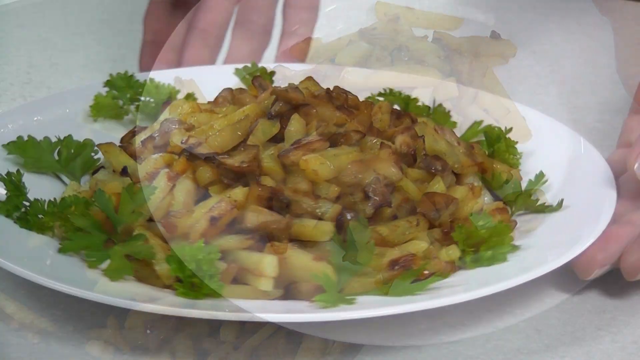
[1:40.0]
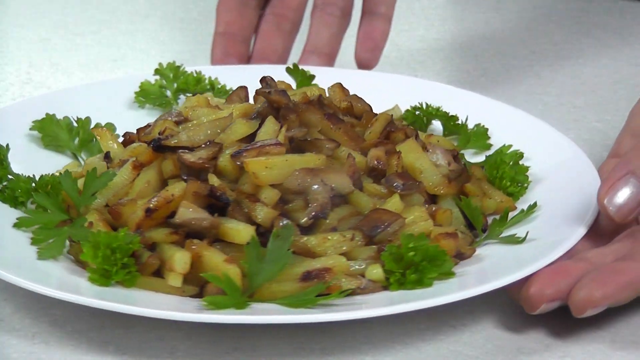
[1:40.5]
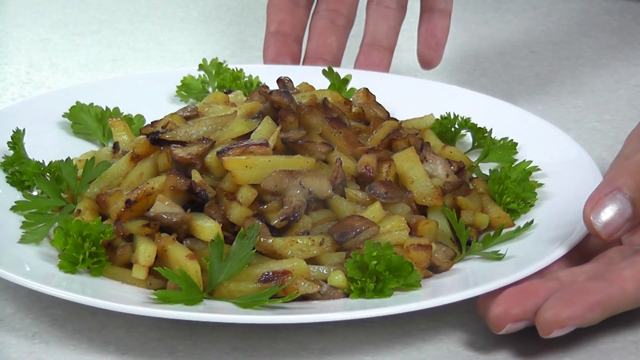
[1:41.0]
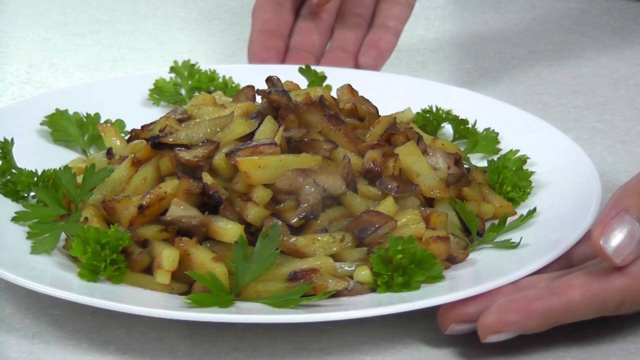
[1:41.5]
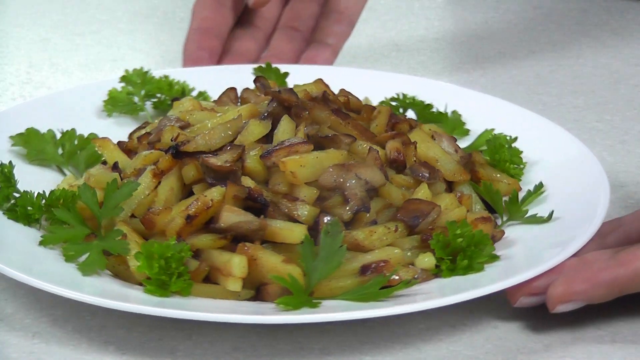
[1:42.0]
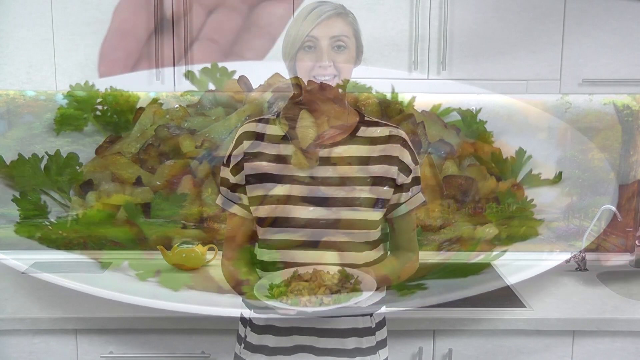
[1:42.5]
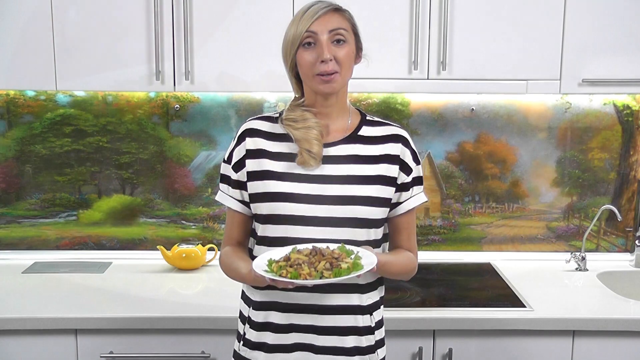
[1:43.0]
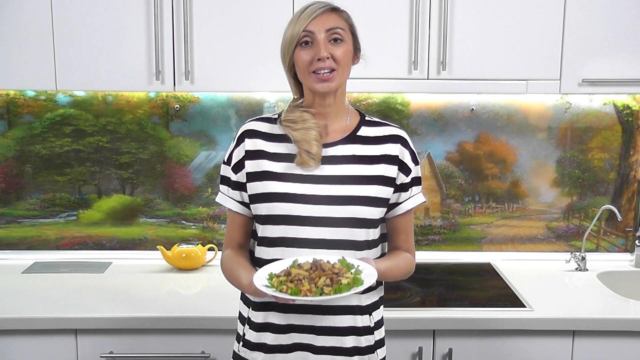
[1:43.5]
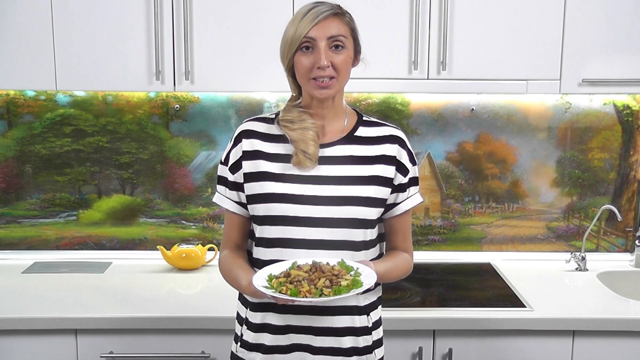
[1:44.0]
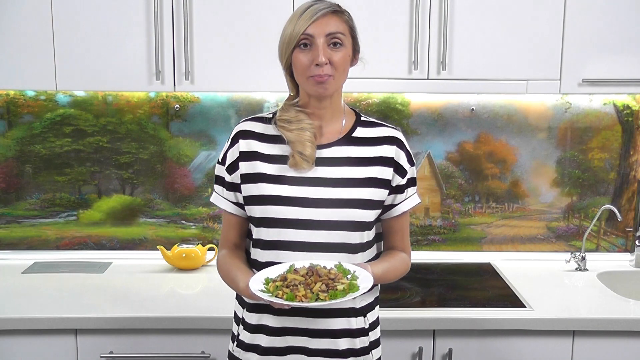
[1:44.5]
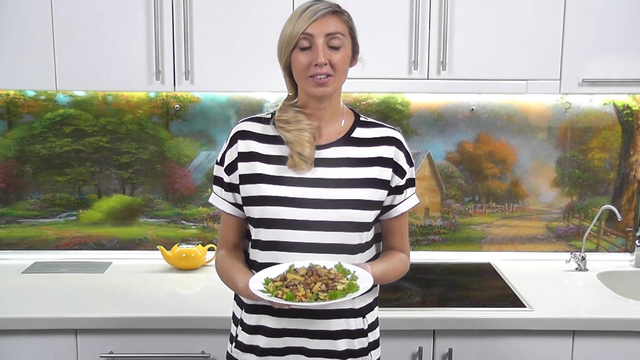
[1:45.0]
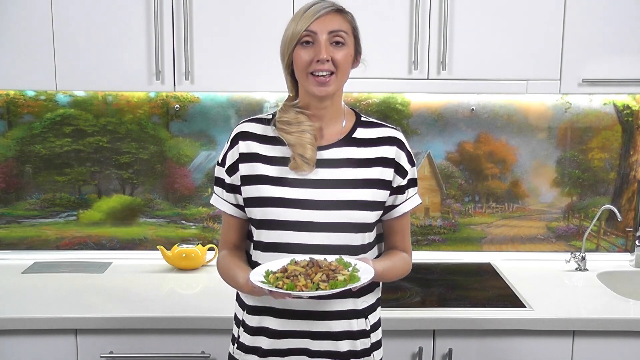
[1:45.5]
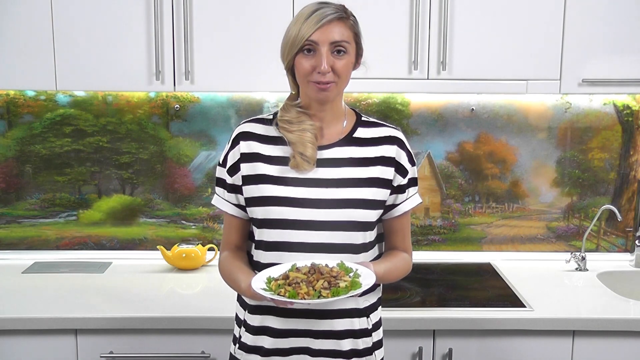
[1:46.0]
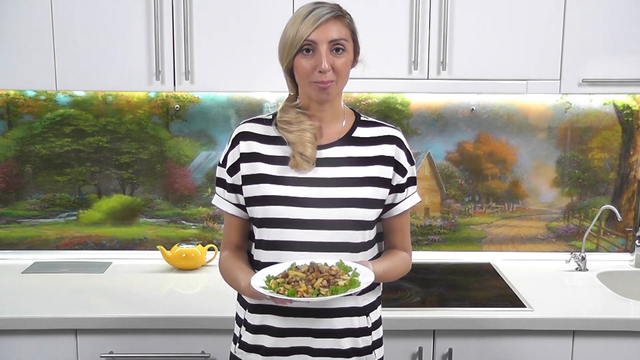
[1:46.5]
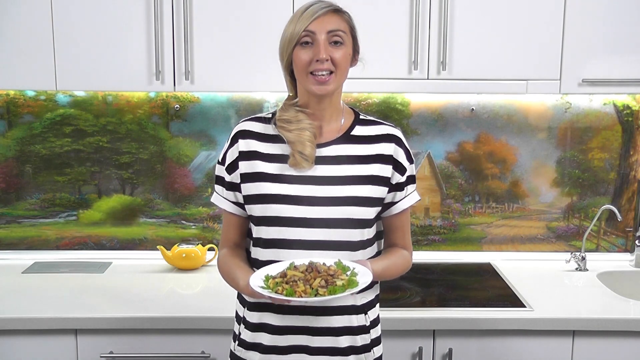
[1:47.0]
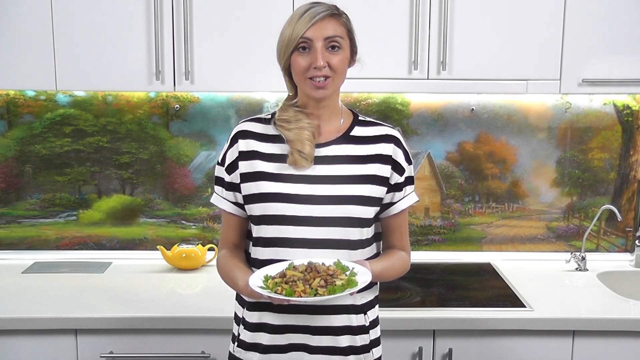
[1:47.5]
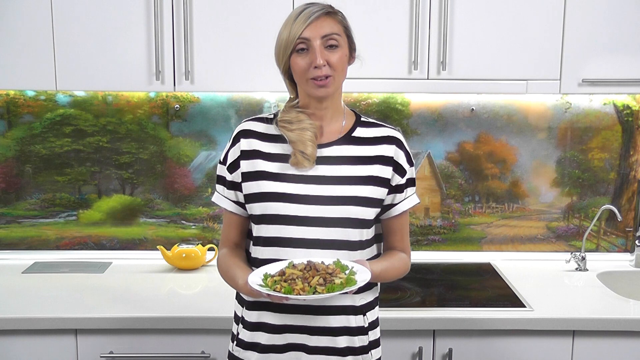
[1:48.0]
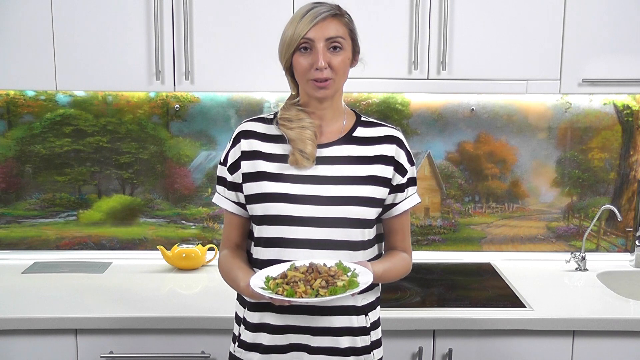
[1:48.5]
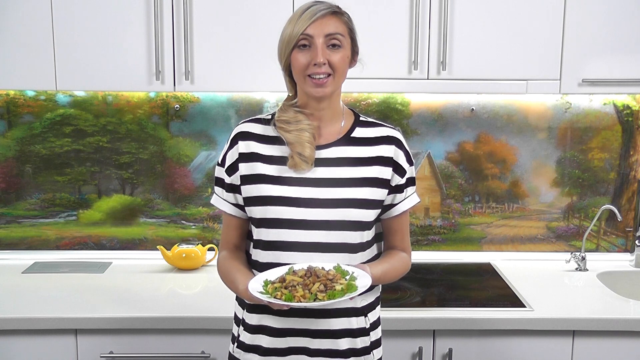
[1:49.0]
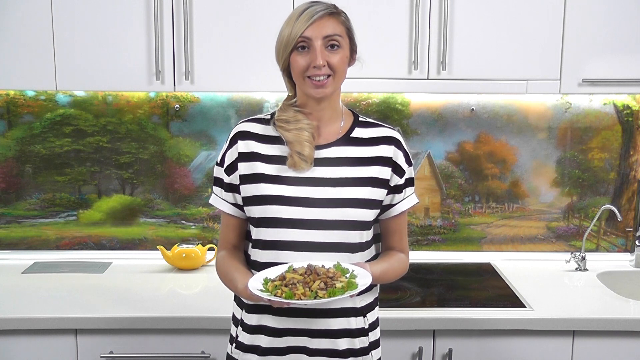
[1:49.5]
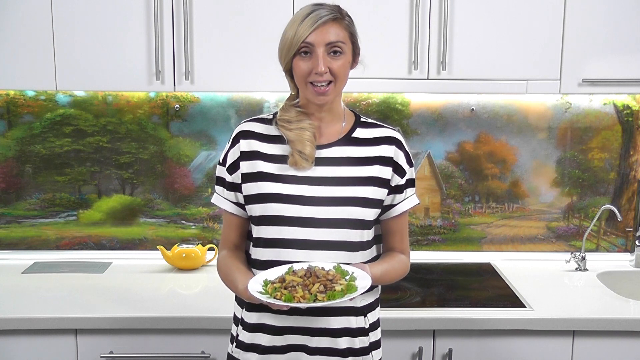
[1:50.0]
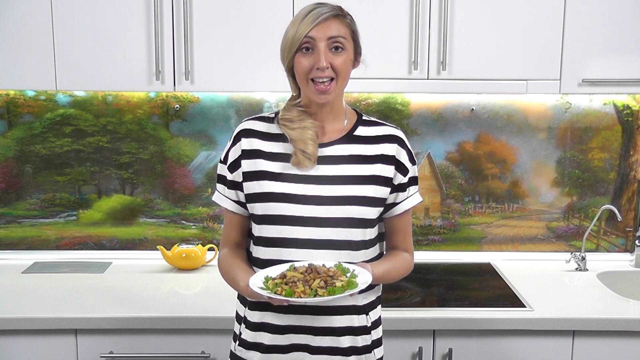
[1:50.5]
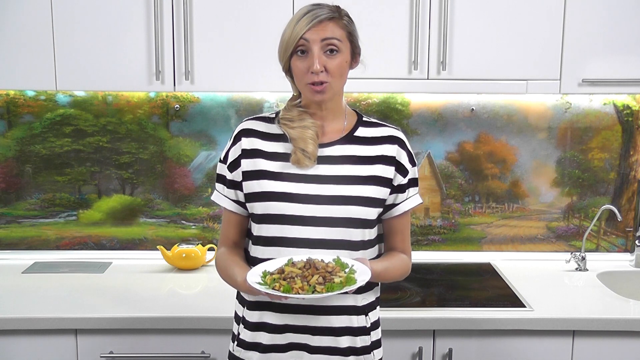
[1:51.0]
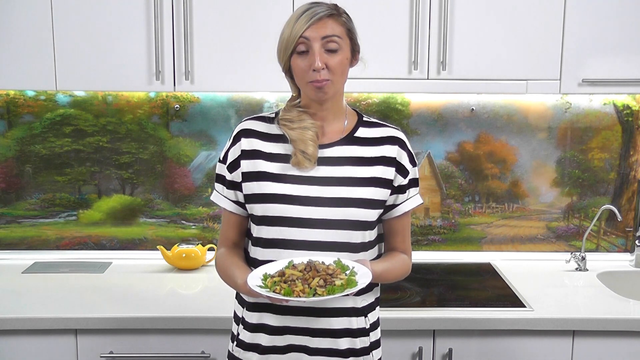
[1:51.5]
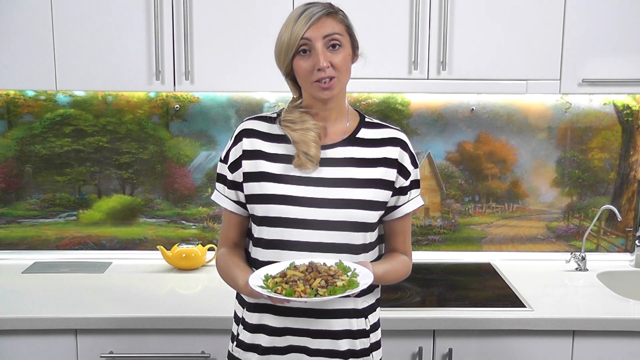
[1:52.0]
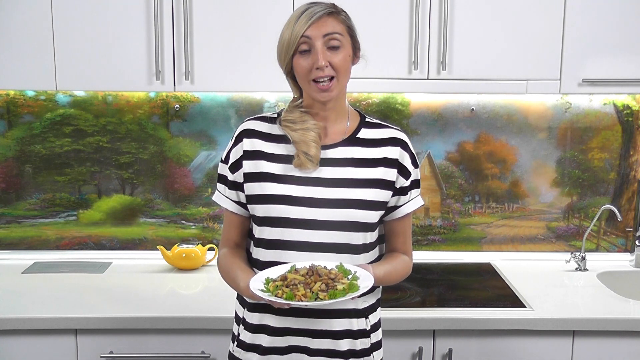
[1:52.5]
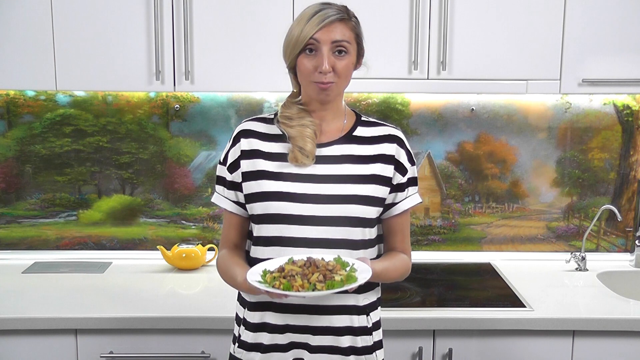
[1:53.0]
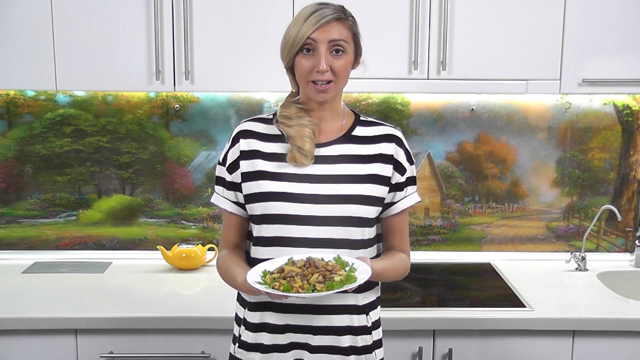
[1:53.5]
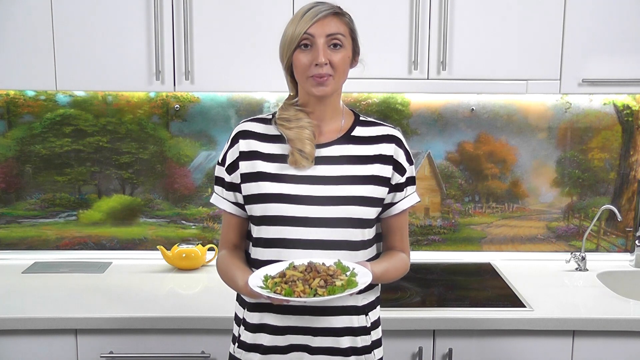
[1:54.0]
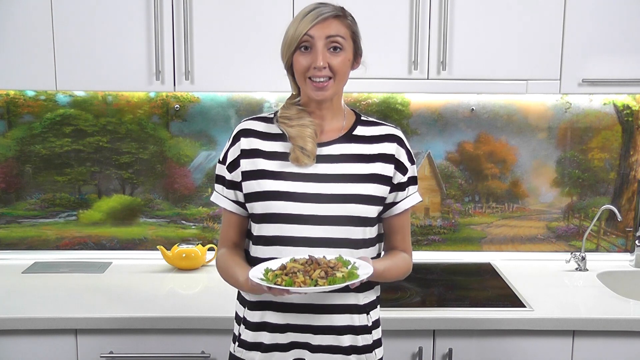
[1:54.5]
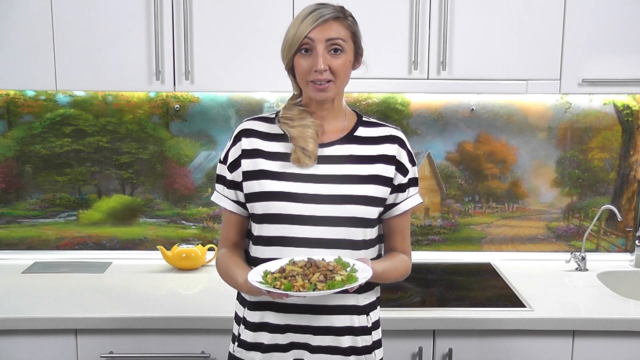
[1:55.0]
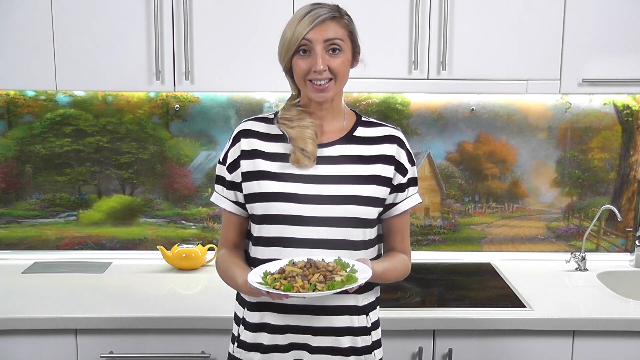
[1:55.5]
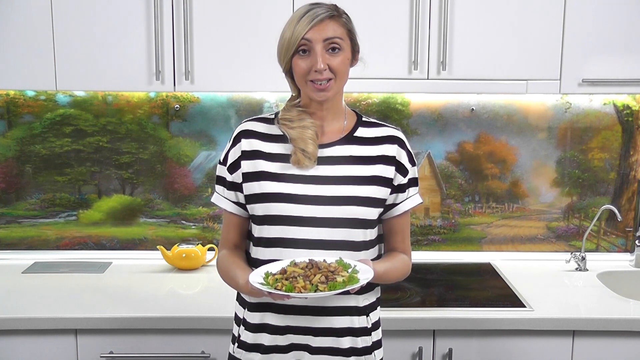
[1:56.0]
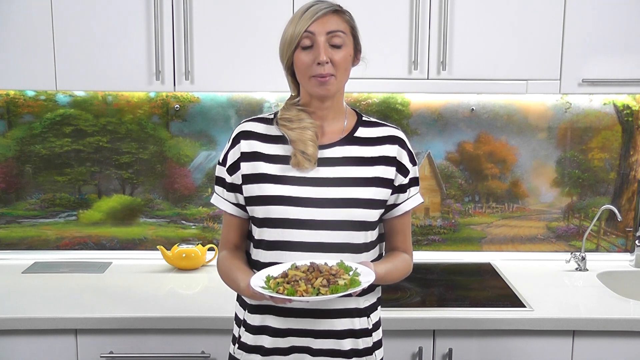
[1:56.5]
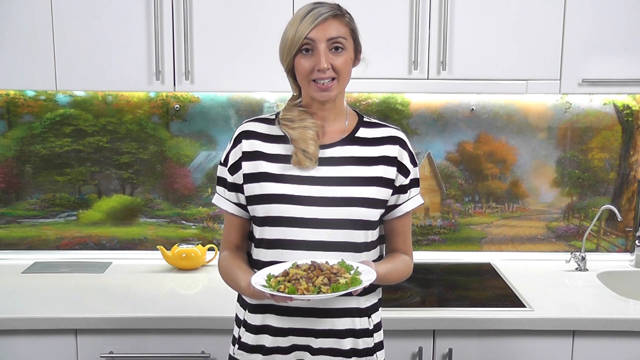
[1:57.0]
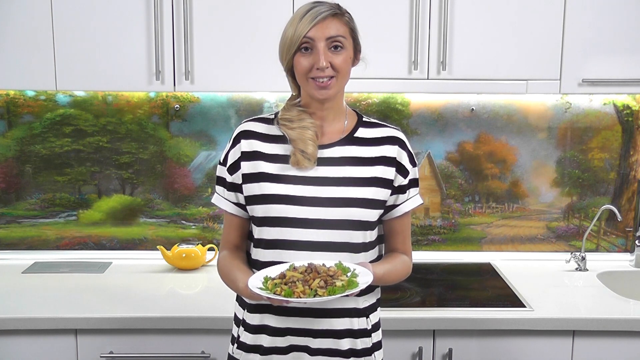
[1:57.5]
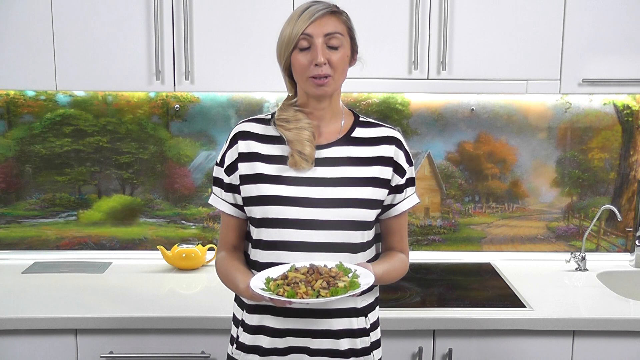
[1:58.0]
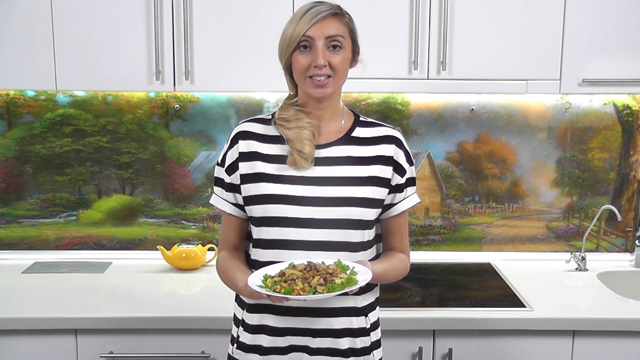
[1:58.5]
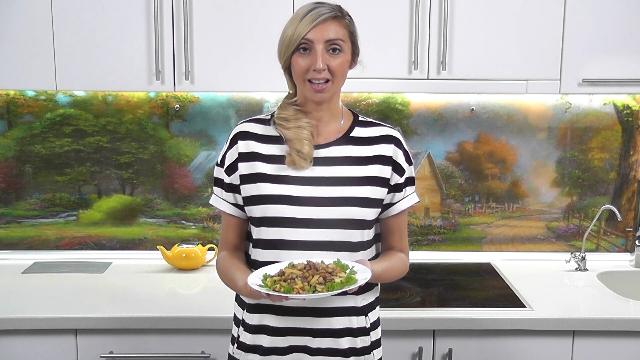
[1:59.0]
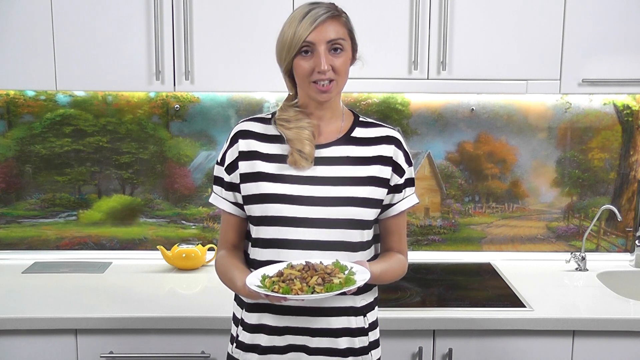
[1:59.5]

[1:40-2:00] She does something with some kind of leafy item, and the potatoes are on a plate. Her hand and fingers are visible as she spins the plate around, showing a 360-degree view of the dish, turning it back and forth, and then holds it with two hands. She wears her black and white shirt. The sink, the cooktop, the cupboard and a decorative element that looks like a backsplash are in the background, along with a yellow pot. She shows the dish off in front of the camera, talking with her white teeth visible and looking focused at the camera. The dish of potatoes, onions and mushrooms is garnished, with salt and pepper.